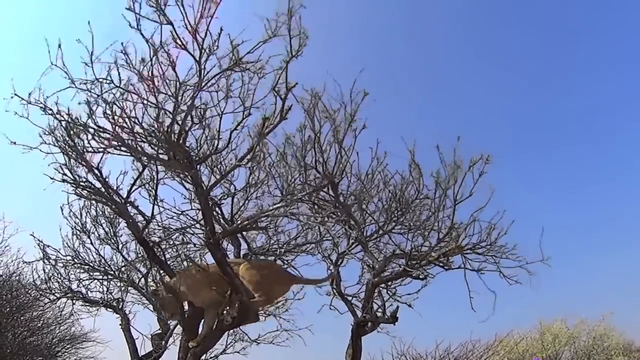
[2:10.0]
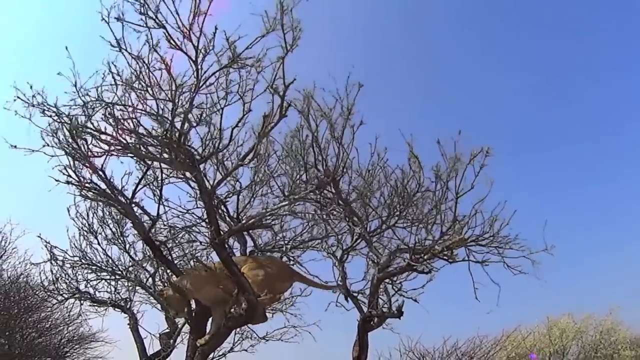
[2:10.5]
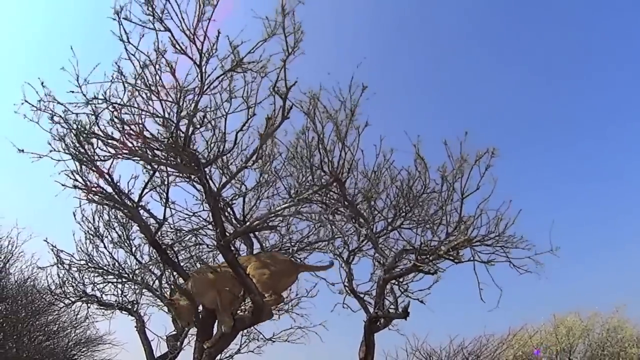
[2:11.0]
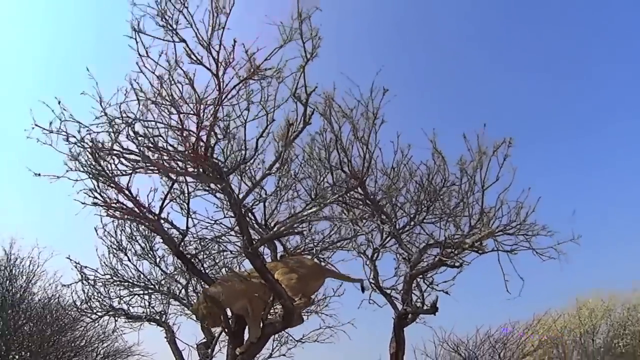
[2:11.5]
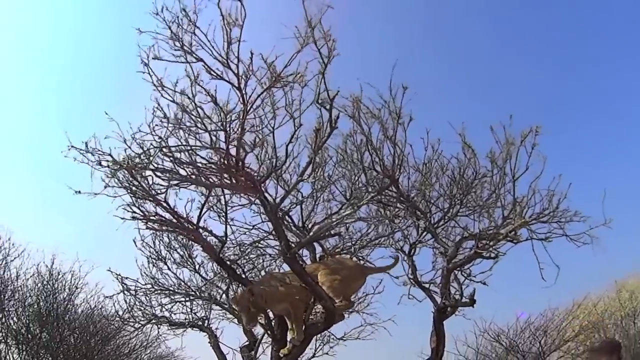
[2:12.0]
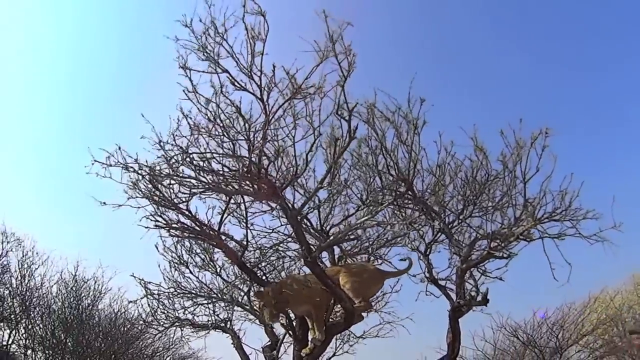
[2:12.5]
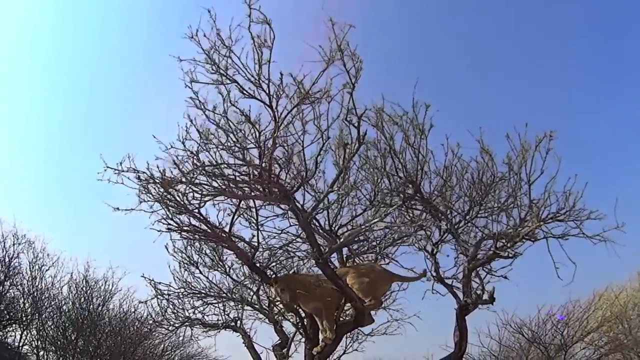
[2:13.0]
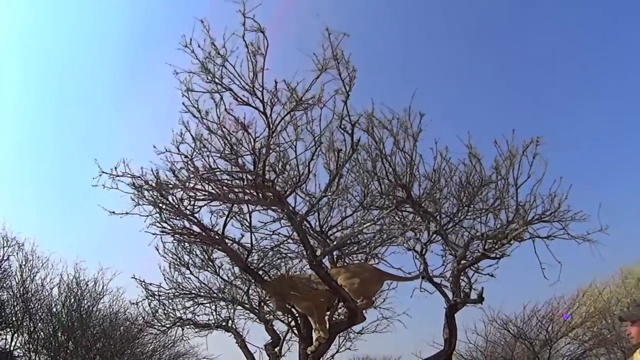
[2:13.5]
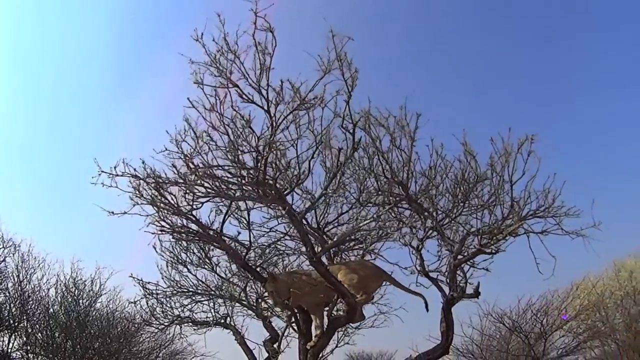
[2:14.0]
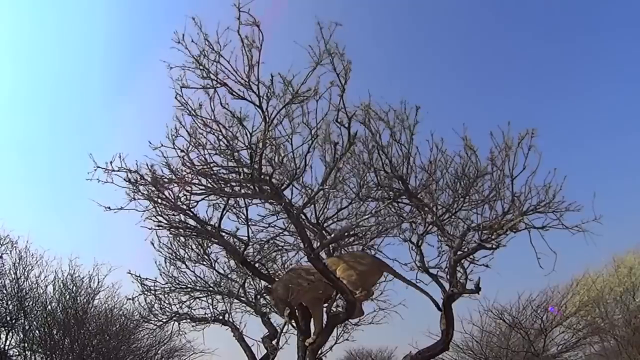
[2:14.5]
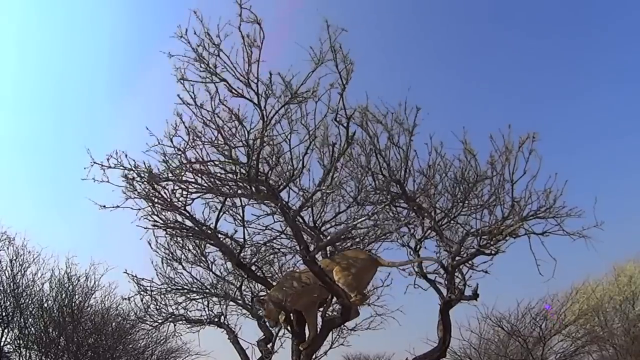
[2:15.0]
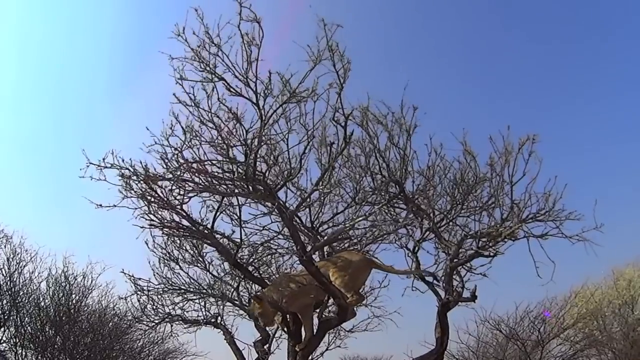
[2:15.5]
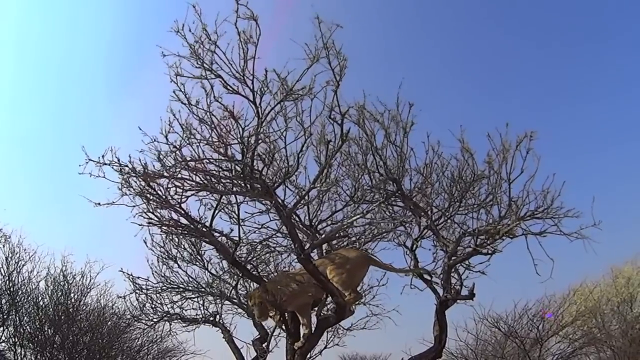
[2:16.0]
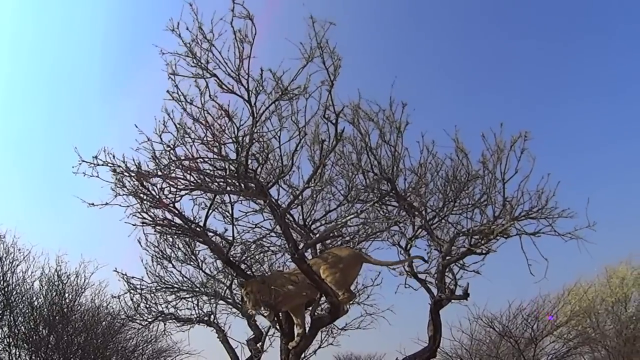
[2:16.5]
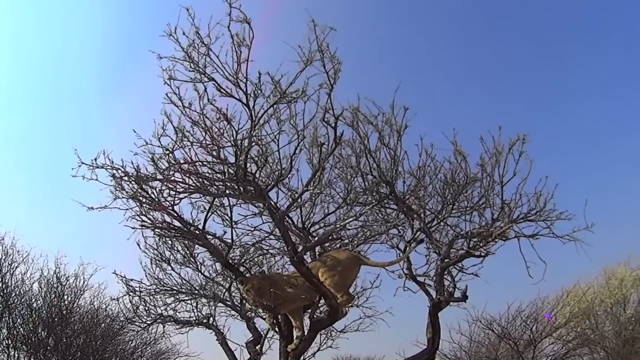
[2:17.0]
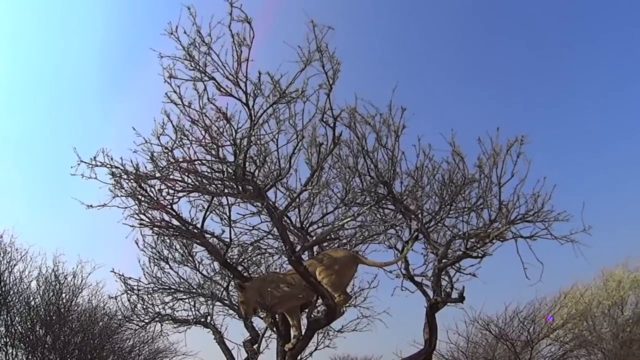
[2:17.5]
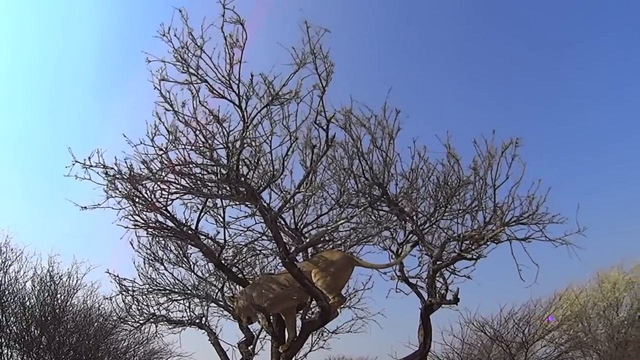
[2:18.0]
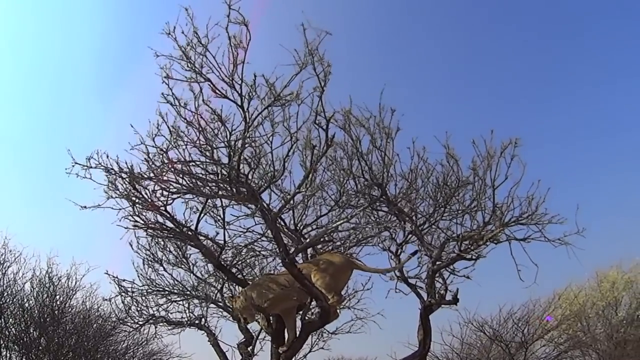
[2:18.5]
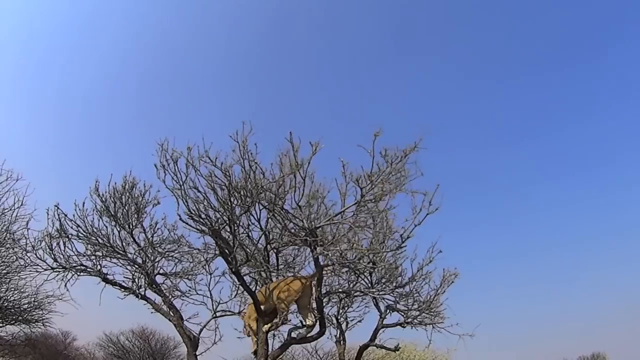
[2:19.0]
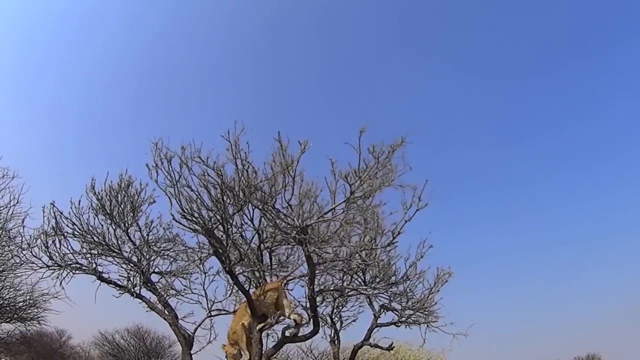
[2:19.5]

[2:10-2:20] The lion sits in the tree, and the tree seems to be moving, either from the wind or possibly because the lion is sitting on some of its branches trying to balance itself. The sky is very blue and clear with no white clouds. The man is not visible at all, not even his shadow; the shot stays on the lion in the tree. After sitting there for some time, the lion eventually jumps off.